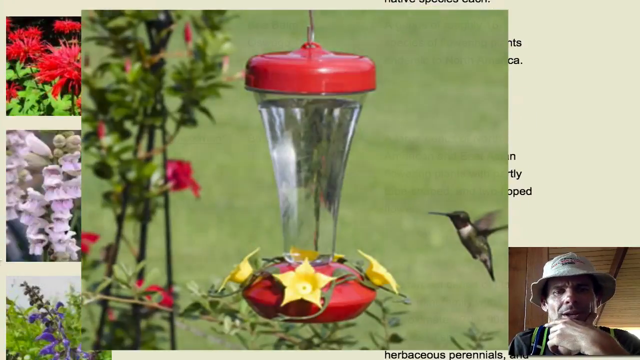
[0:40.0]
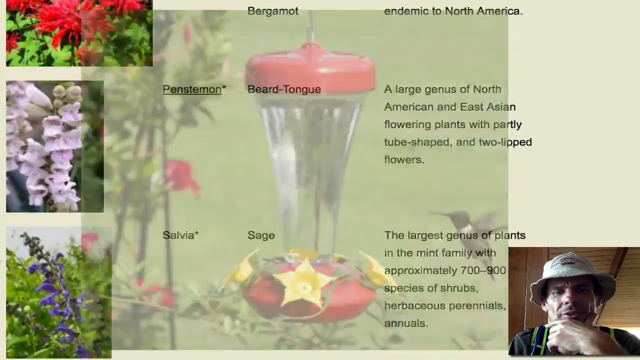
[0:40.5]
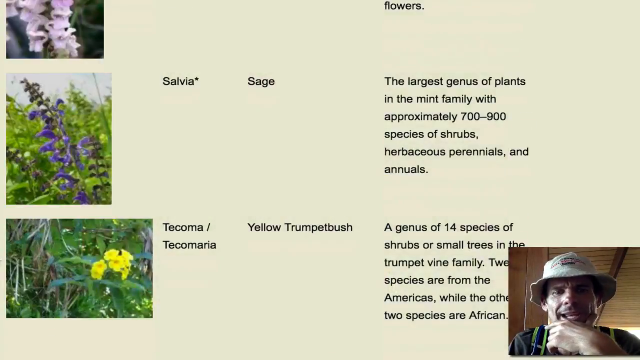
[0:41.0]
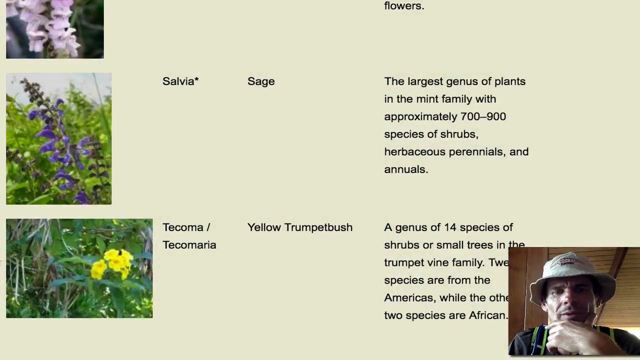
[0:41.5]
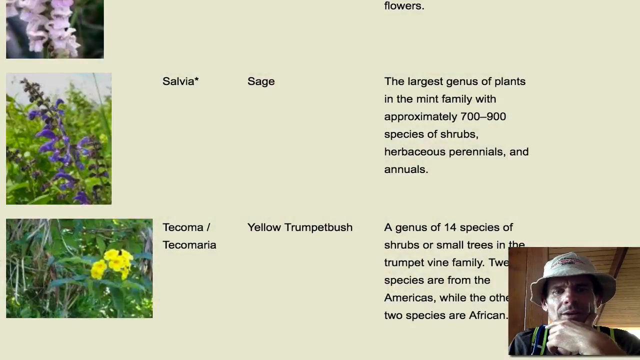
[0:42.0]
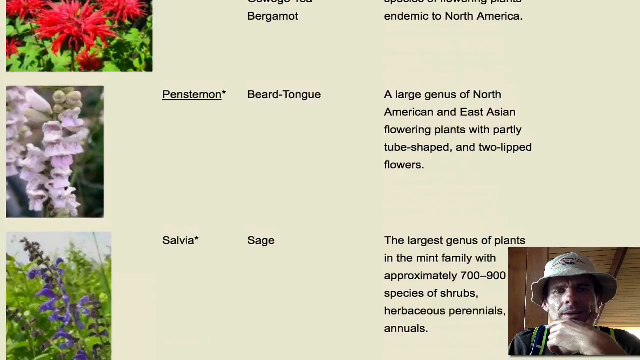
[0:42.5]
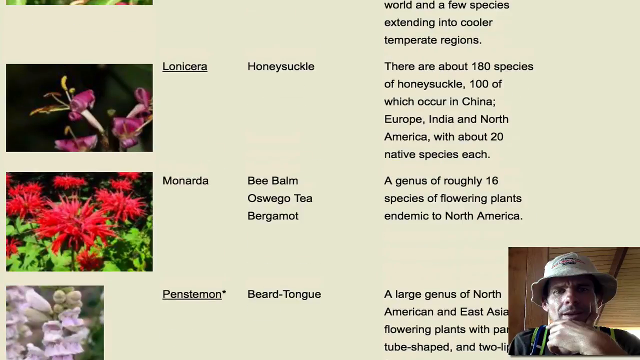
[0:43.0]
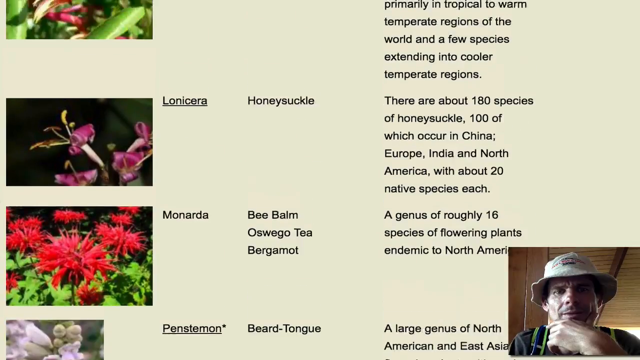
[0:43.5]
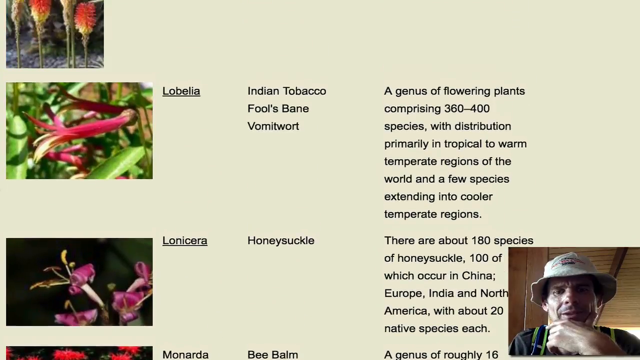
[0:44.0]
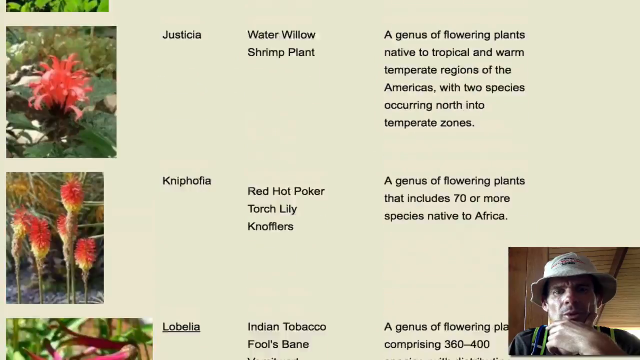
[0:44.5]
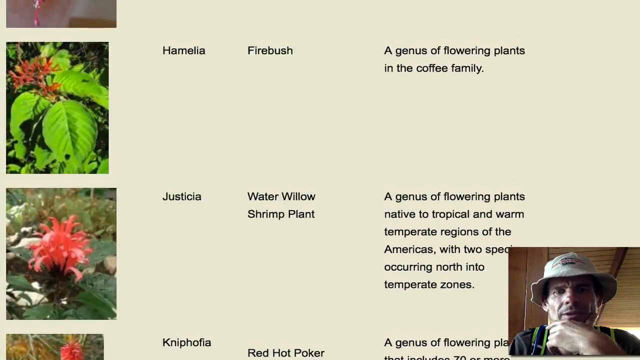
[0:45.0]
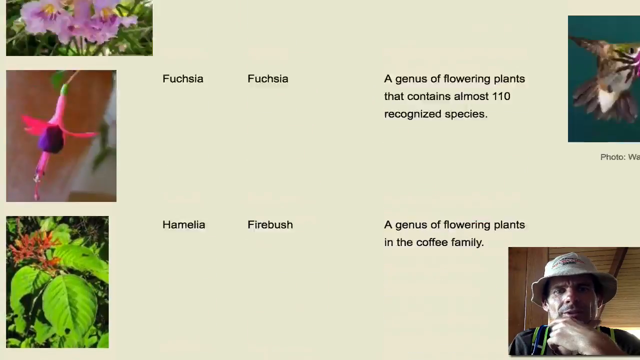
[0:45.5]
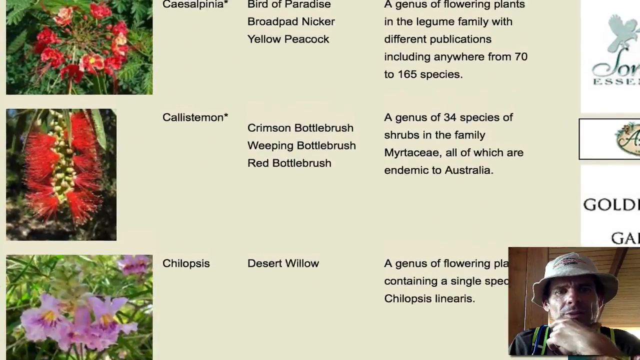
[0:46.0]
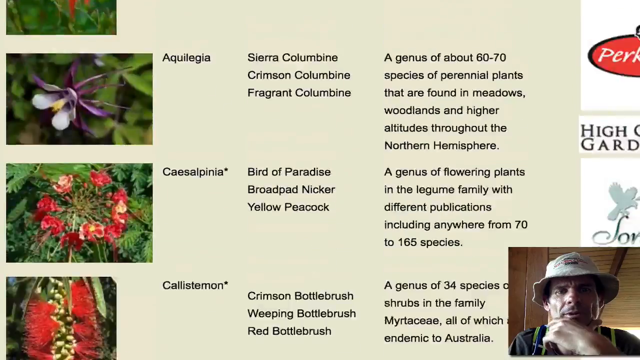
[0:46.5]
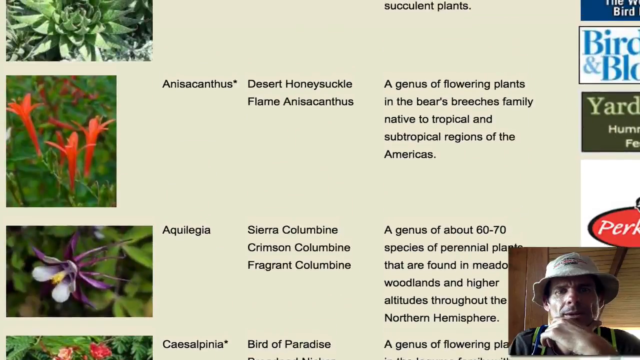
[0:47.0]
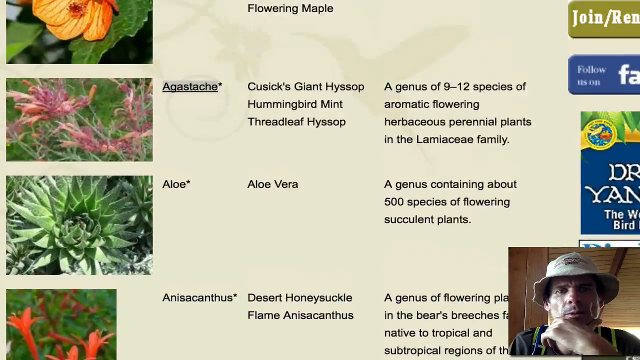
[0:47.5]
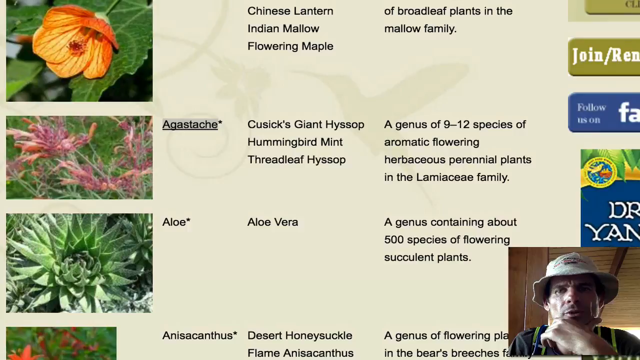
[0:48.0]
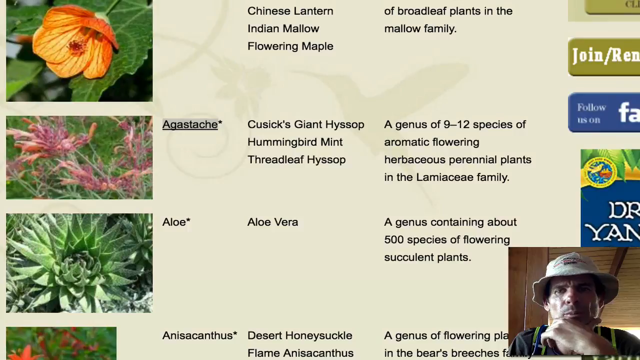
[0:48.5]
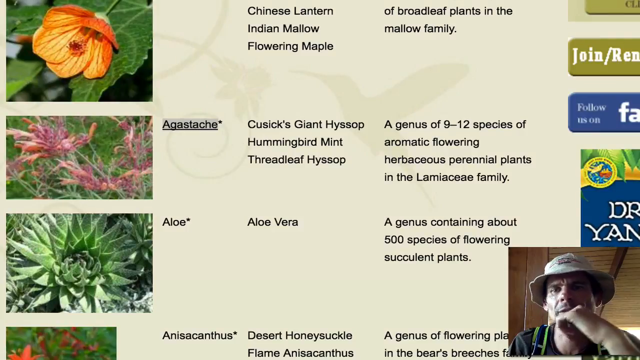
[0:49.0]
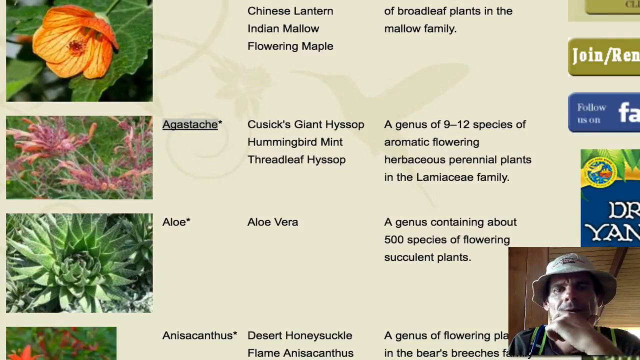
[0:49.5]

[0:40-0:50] The man scrolls back up to Agastache and apparently clicks on it directly. It looks pink with green around it, listed with common names including giant hyssop and hummingbird mint, and "a genus of 9 to 12 species of aromatic flowering herbaceous perennial plants." Aloe is shown next, looking green, listed as aloe vera, "a genus containing about 500 species of flowering succulent plants." The list looks like it is arranged alphabetically. A yellow plant is also shown up the page, its name not readable, possibly with something about it being Chinese.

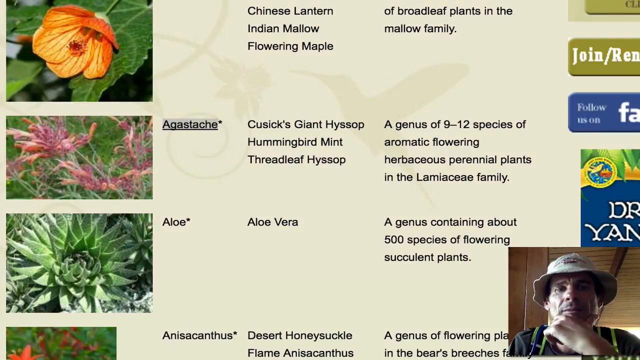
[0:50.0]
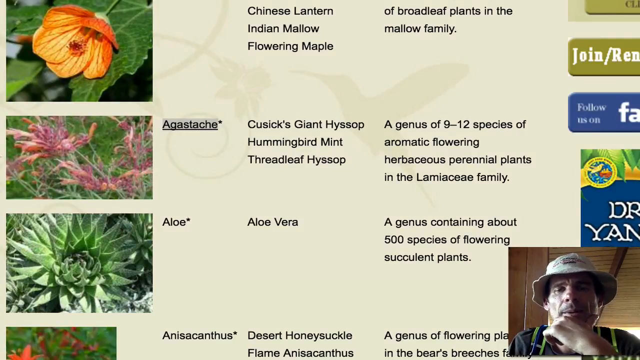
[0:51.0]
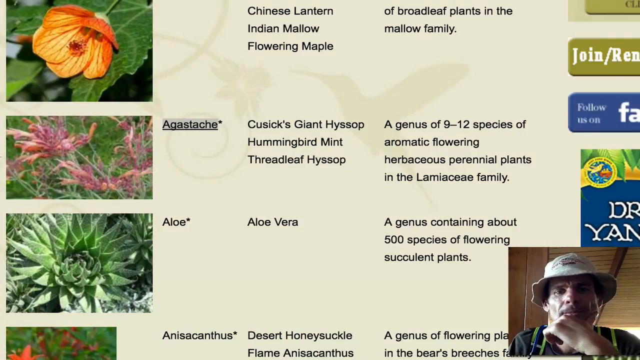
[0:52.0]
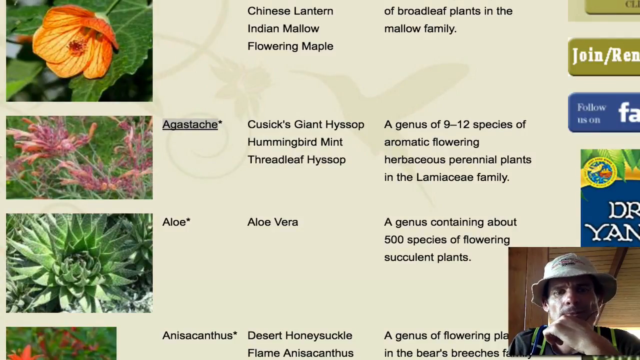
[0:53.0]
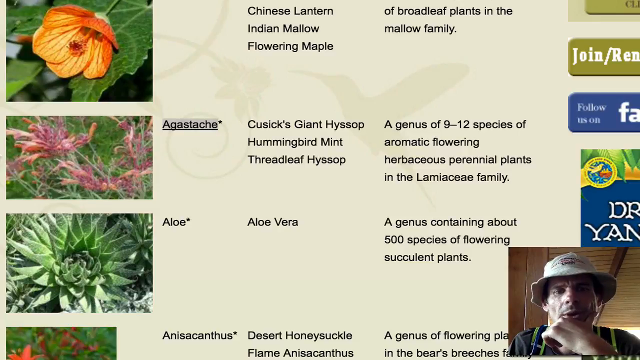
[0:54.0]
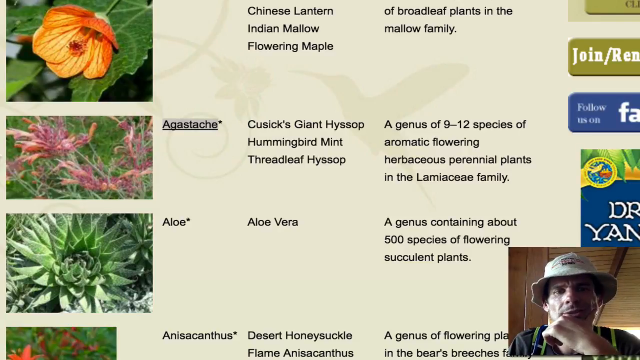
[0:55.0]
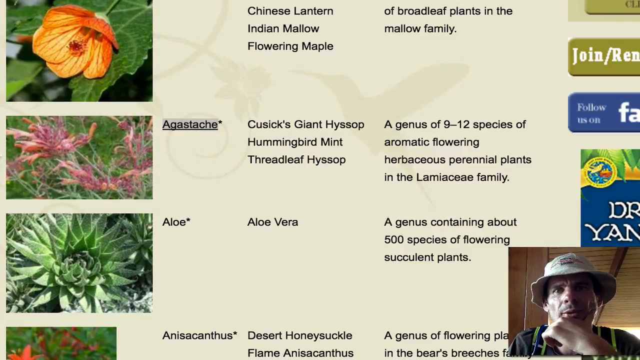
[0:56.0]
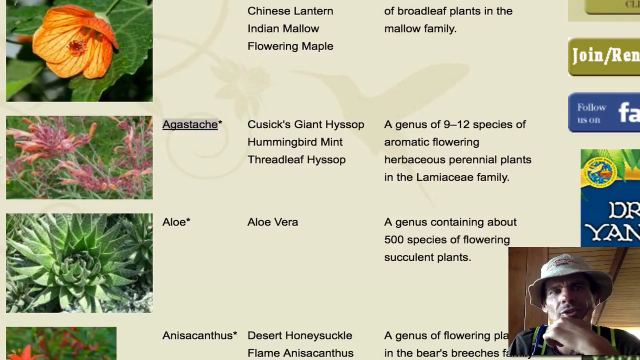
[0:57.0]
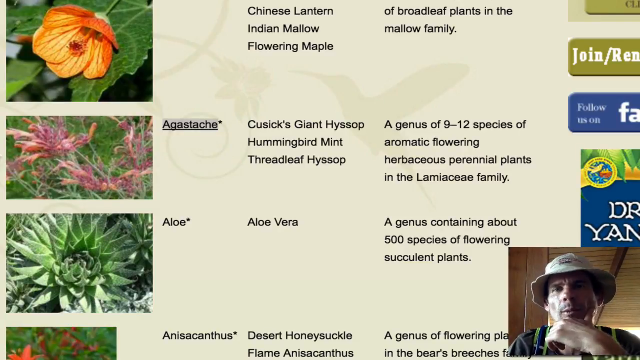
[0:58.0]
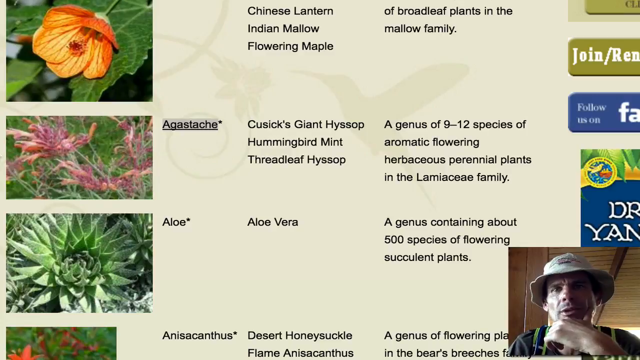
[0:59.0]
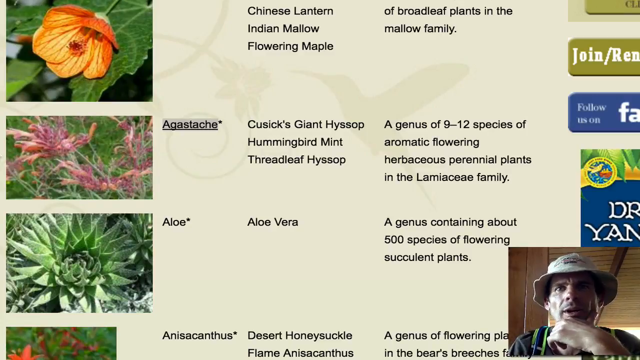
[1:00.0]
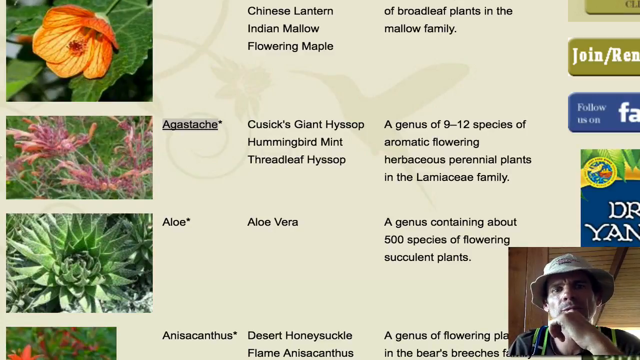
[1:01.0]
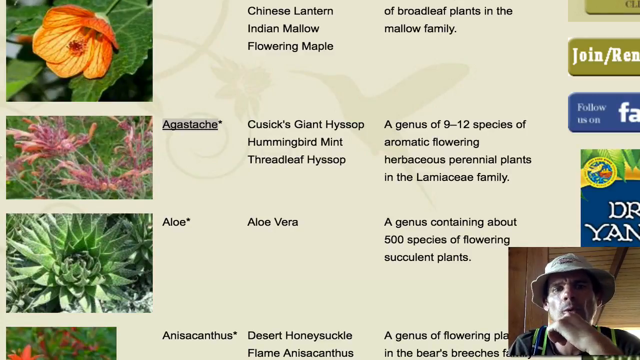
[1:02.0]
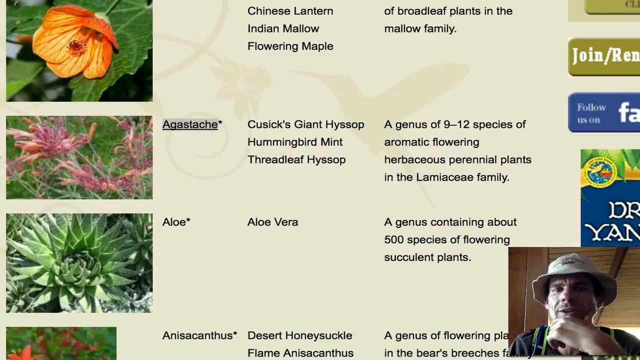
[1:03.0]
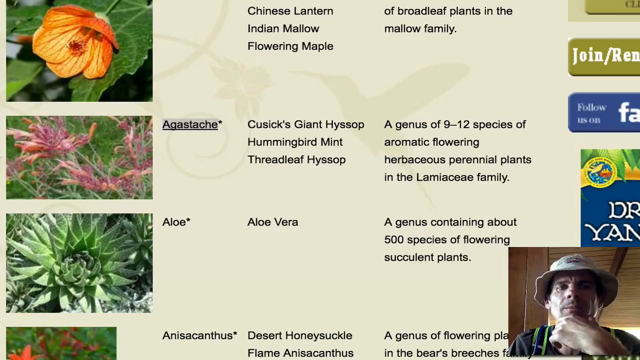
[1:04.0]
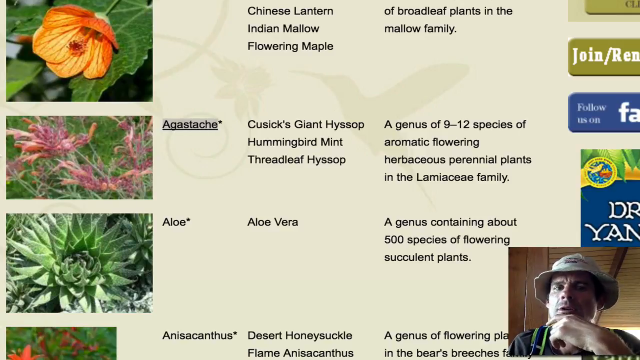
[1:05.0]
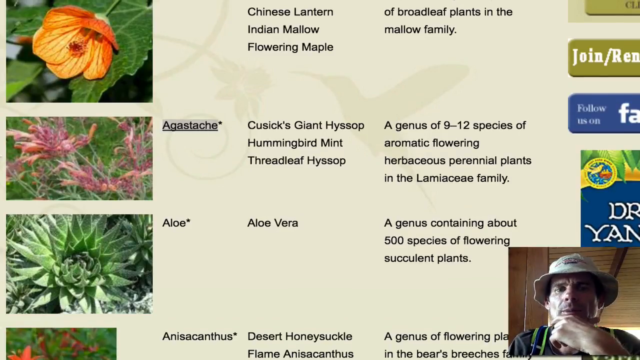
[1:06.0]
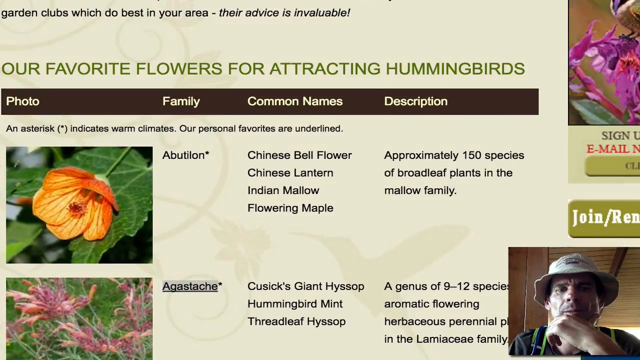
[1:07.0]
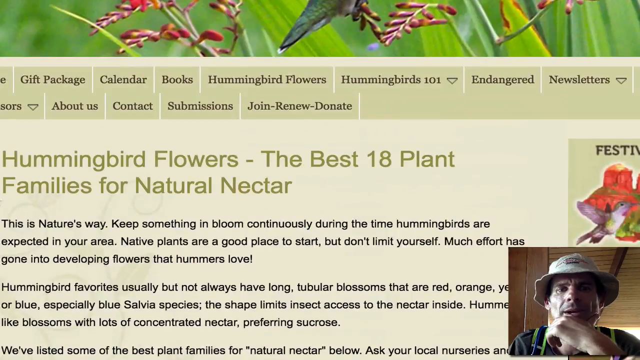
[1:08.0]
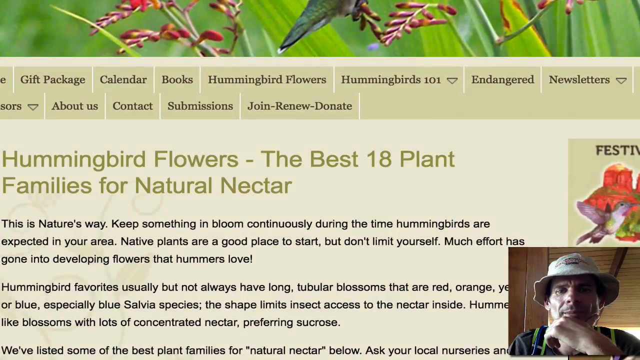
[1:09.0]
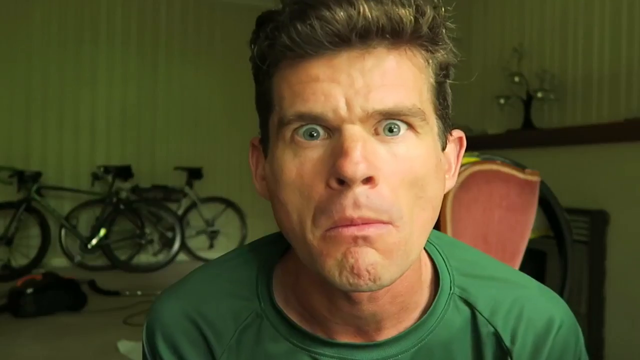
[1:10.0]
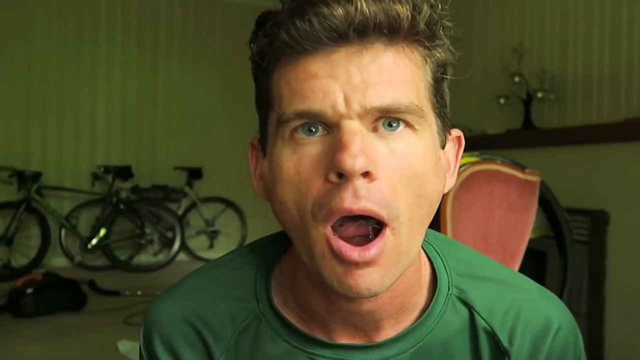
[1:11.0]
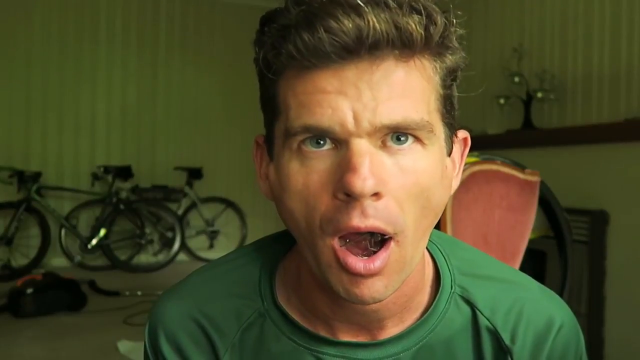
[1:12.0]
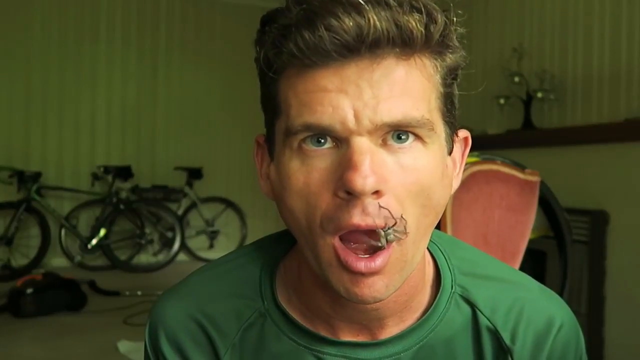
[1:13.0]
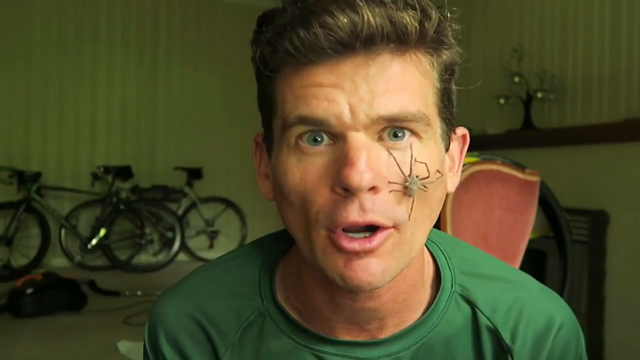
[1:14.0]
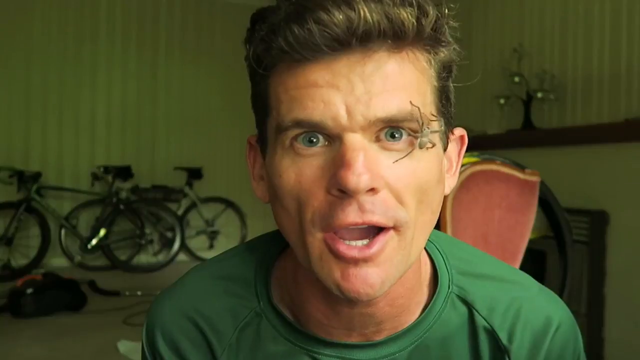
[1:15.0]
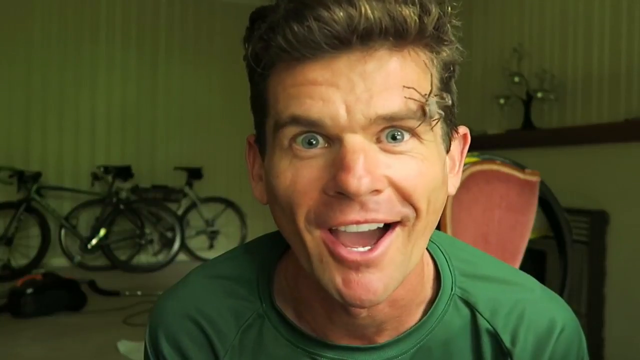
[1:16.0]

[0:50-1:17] The mouse stays on Agastache for a moment, apparently emphasizing it, then moves on to an orange plant that looks like Abutilon, with common names "Chinese bellflower, Chinese lantern, Indian mallow, flowering maple" and a description of approximately 150 species of broadleaf plants in the mallow family. An asterisk indicates warm climates. Text reads "our favorite flowers for attracting hummingbirds." The man moves up the page to "hummingbird flowers: the best 18 plant families for natural nectar," with text including "usually but not always have long tubular blossoms that are red, orange or blue, especially blue salvia species." The video then shows a man, in his 40s or thereabout and looking like John Cena, opening his mouth as a spider comes out of it, which ends the video.